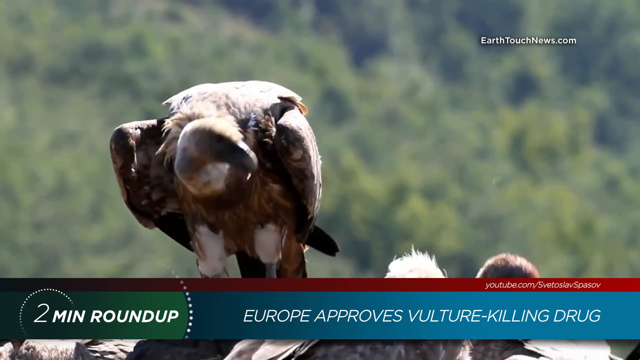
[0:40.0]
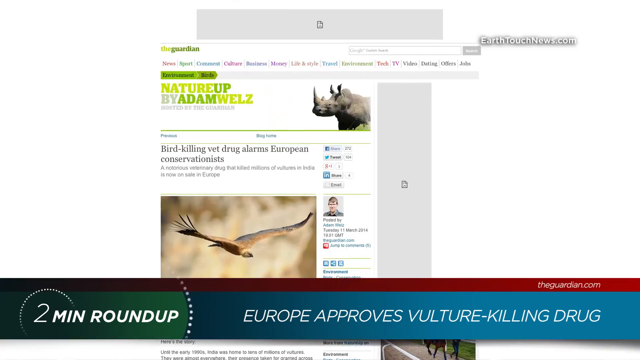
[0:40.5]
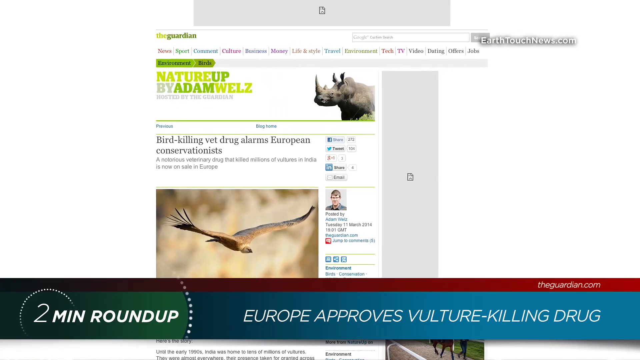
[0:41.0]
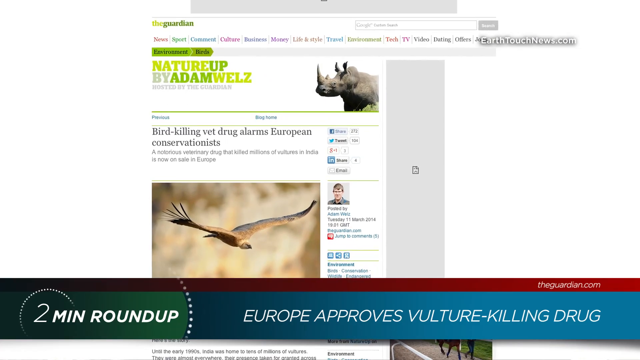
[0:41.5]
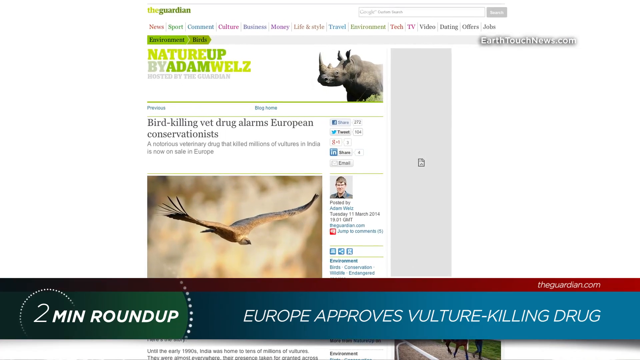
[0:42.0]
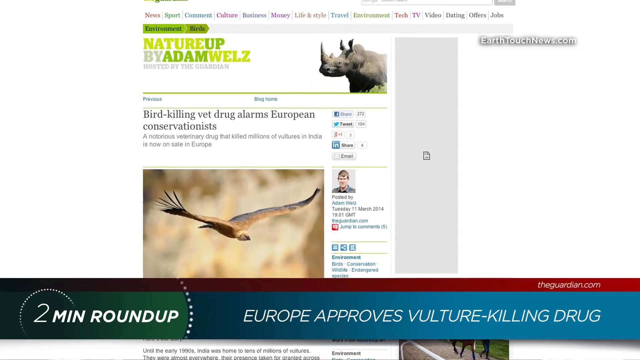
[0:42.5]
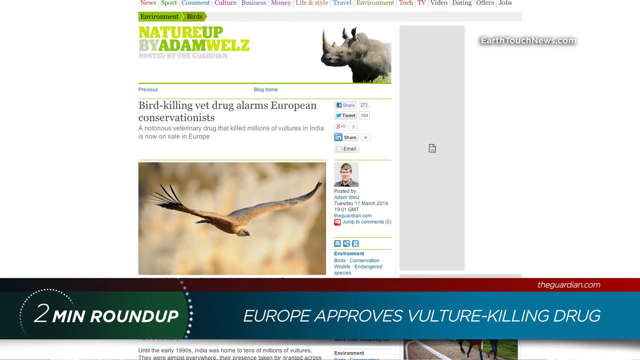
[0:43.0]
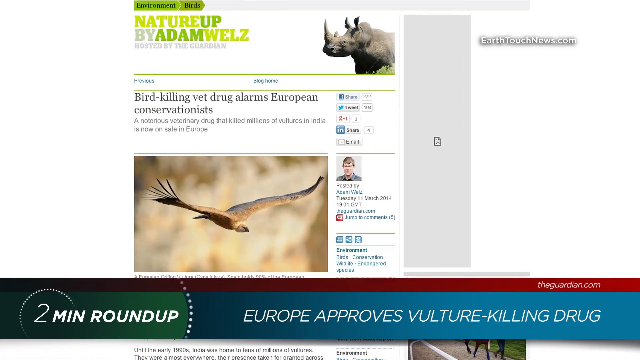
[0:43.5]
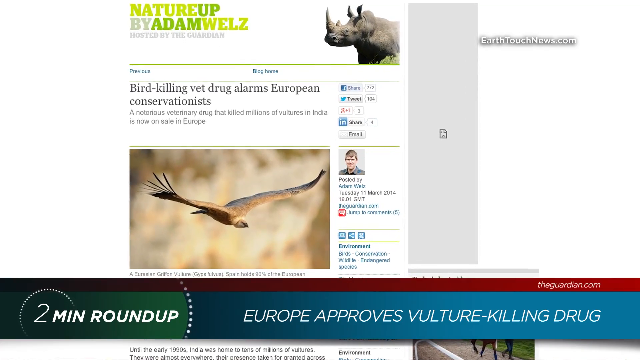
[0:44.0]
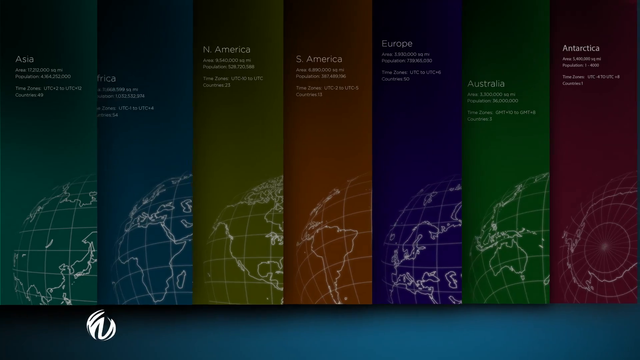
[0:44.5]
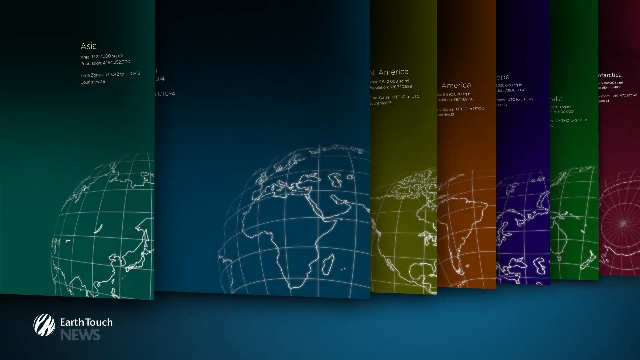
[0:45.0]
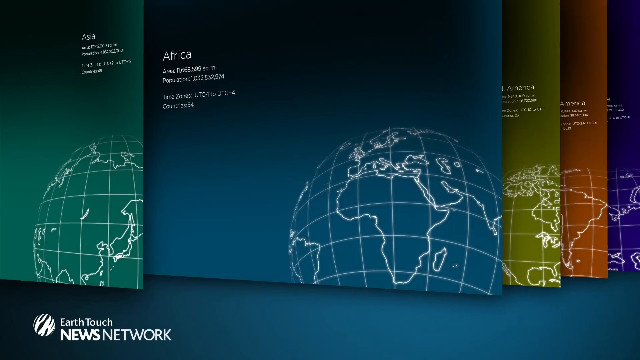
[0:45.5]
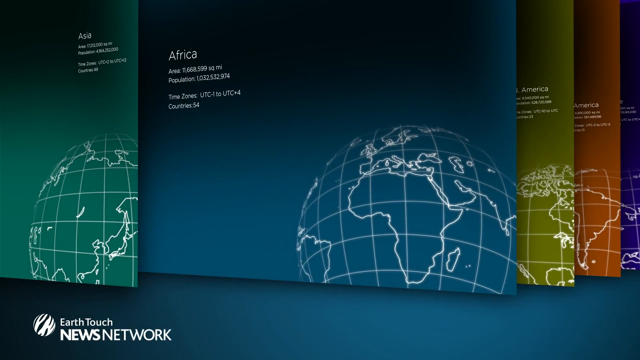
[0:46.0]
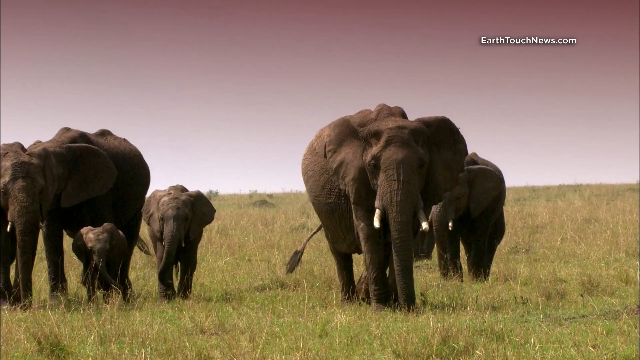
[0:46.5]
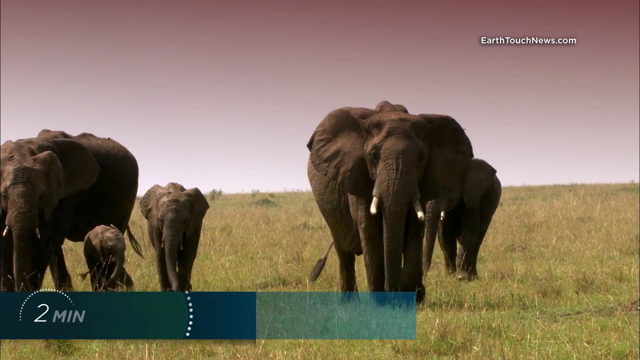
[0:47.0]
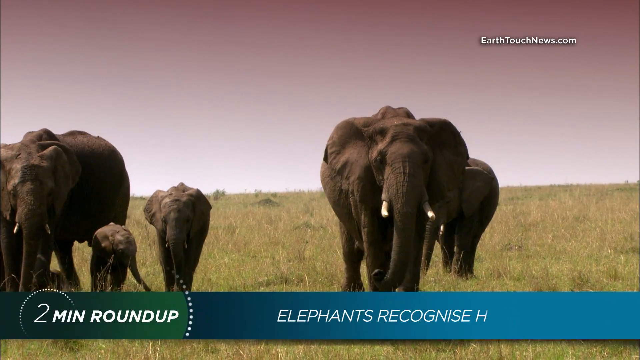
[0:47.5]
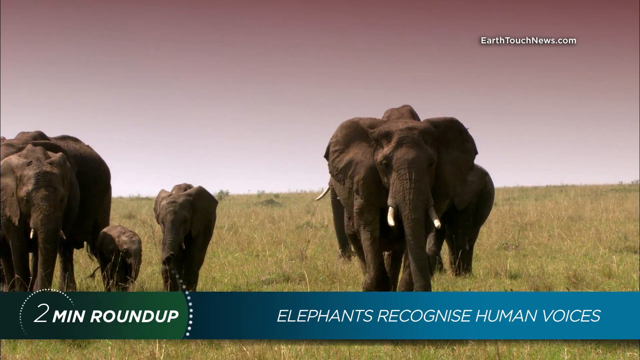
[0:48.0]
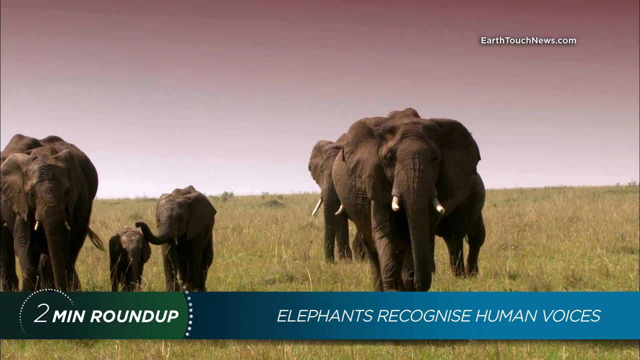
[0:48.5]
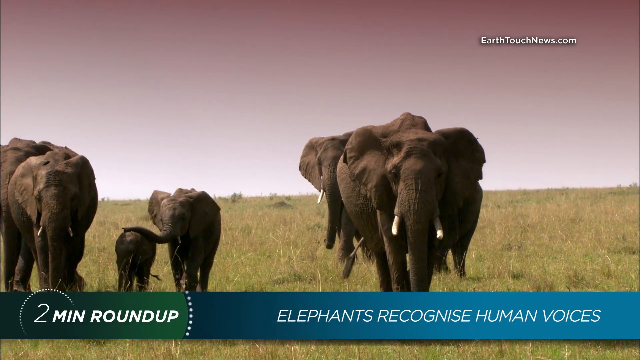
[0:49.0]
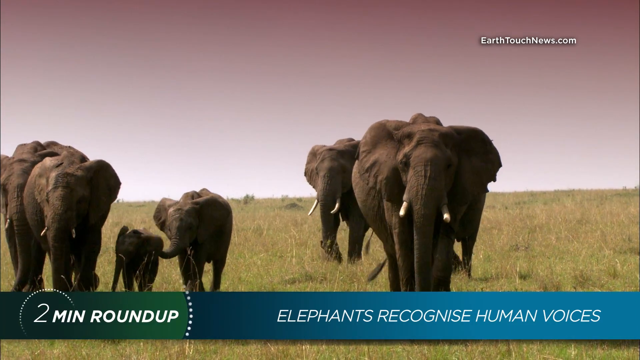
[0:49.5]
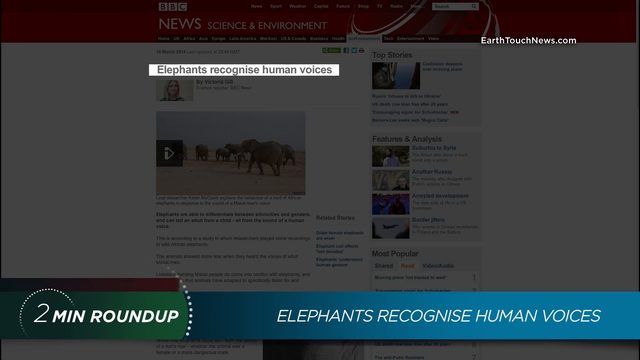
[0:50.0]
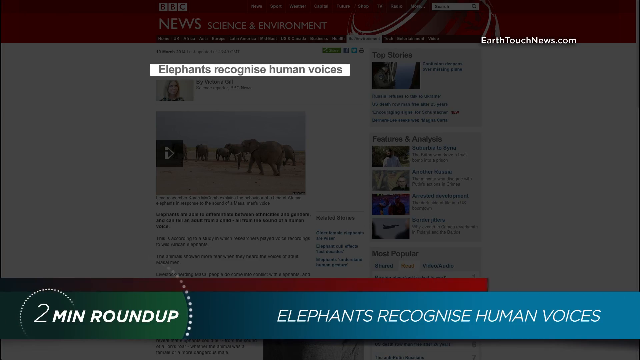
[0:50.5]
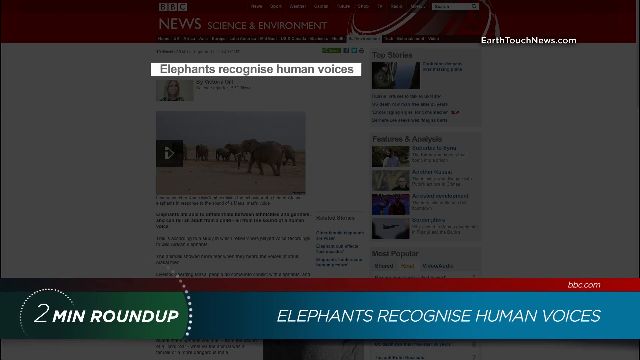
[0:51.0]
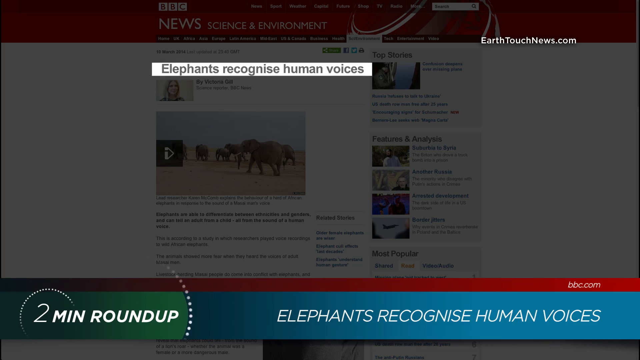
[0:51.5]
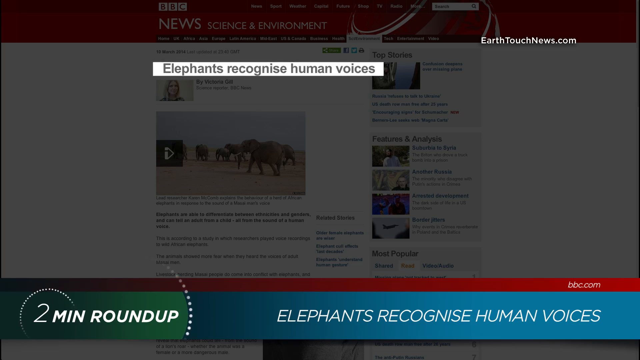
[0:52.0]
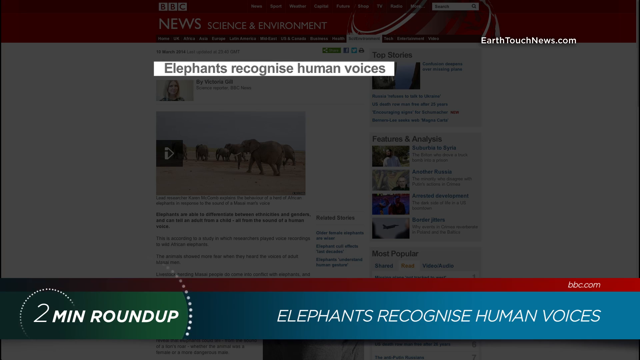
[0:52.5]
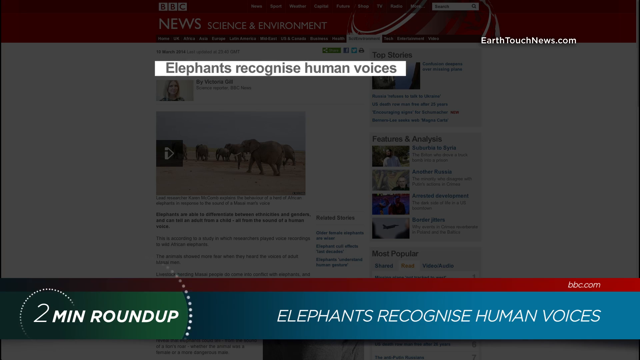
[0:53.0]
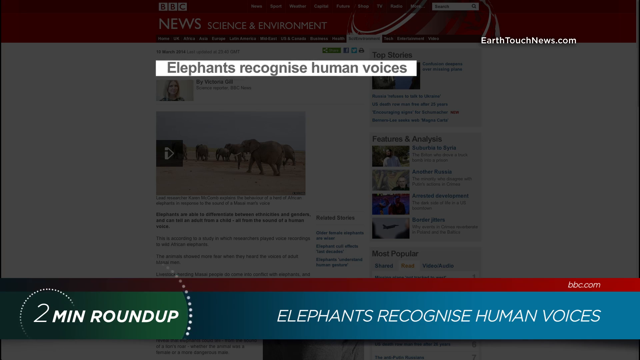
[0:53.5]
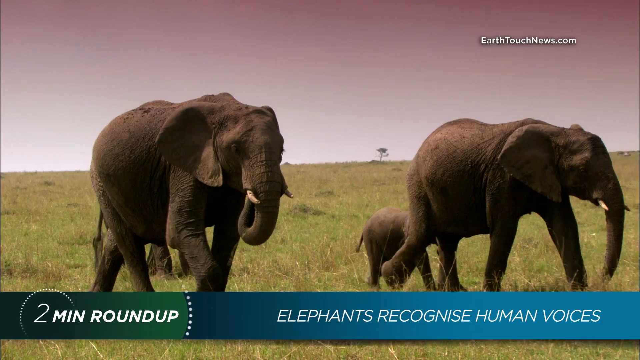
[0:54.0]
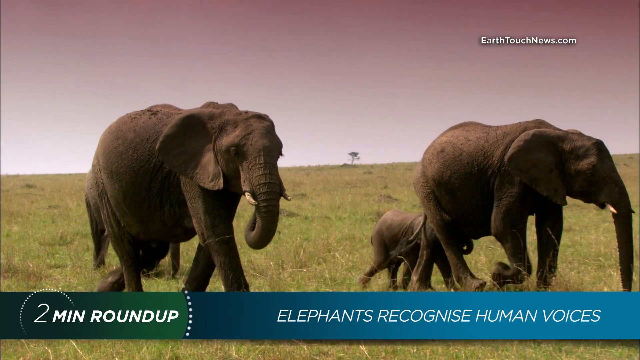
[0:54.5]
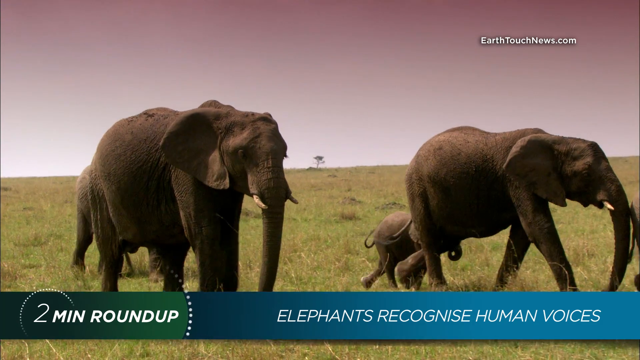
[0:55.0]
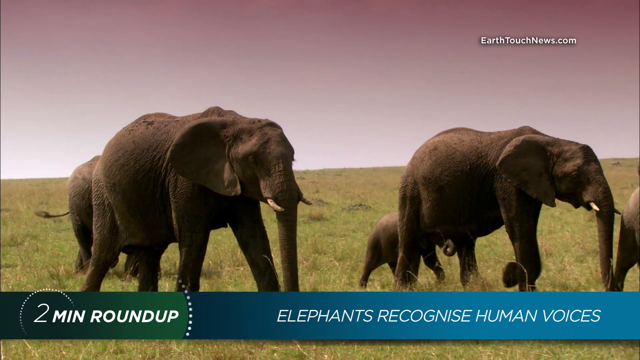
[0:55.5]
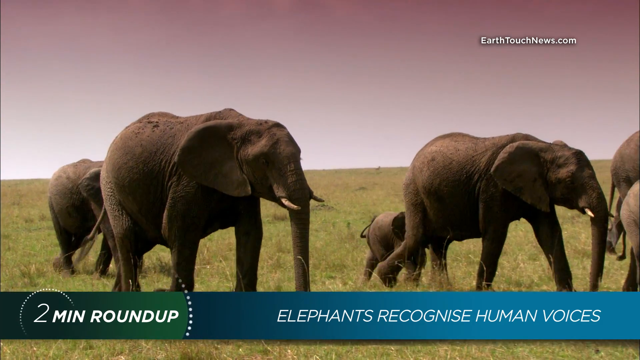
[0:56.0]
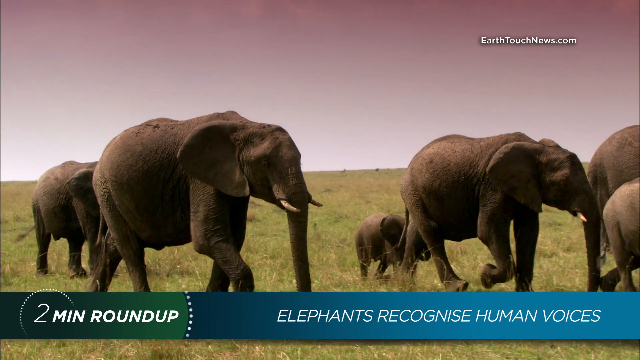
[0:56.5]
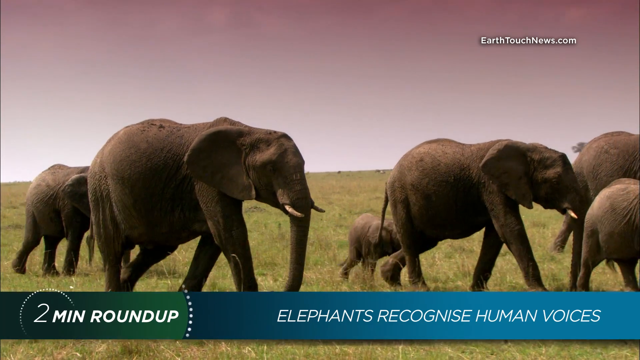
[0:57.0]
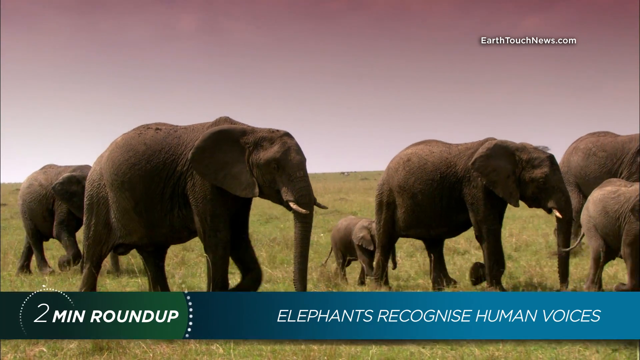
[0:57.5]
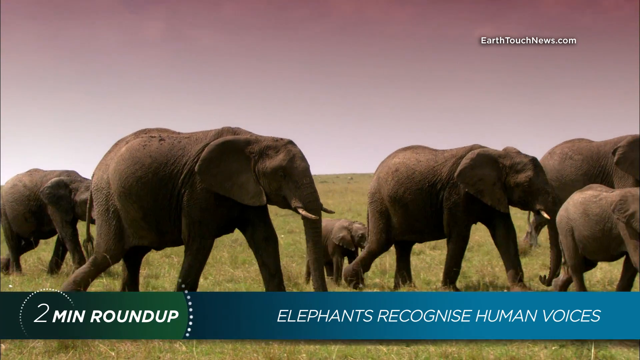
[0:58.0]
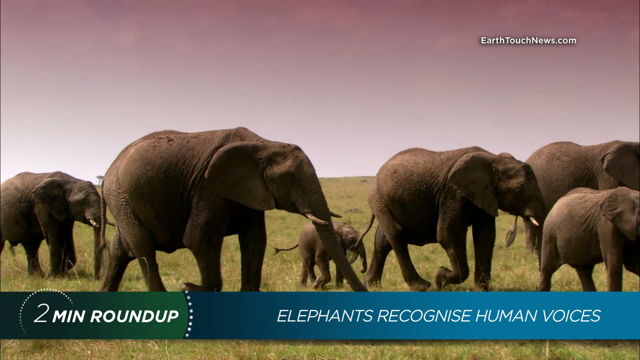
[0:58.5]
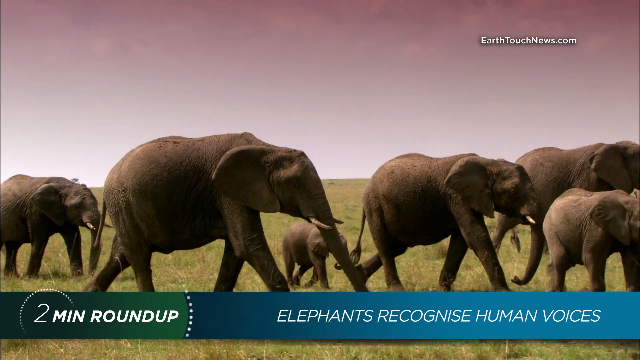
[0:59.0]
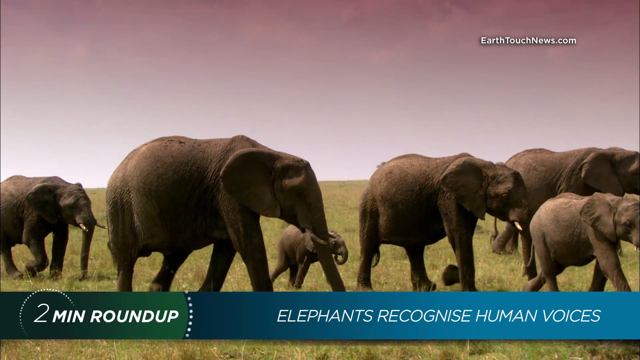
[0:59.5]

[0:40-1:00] A vulture is shown, then the video cuts to a web page reading "bird killing vet drug alarms European conservationists" and zooms in slowly on the image of the bird, whose wings are spread out. A screen follows showing different countries, each color coded with a globe: Asia, North America, South America, Europe, Australia and Antarctica. The view zooms in on Africa, and as part of the two-minute roundup it says "elephants recognize human voices" while a group of elephants of all sizes walks towards the screen. Next, "elephants recognize human voices" appears in white text on a BBC News web page; the text slowly gets larger as it comes closer to the screen. The video then cuts back to the elephants walking, all of different sizes, together in a large group in the daytime.